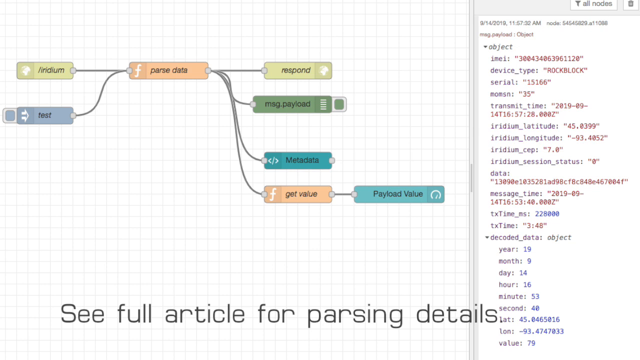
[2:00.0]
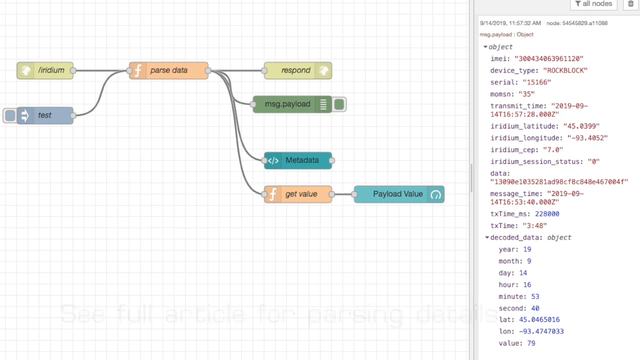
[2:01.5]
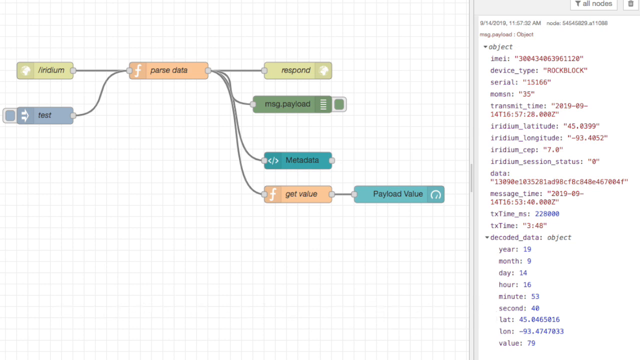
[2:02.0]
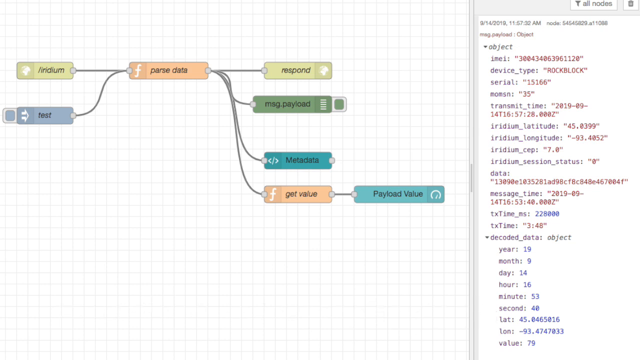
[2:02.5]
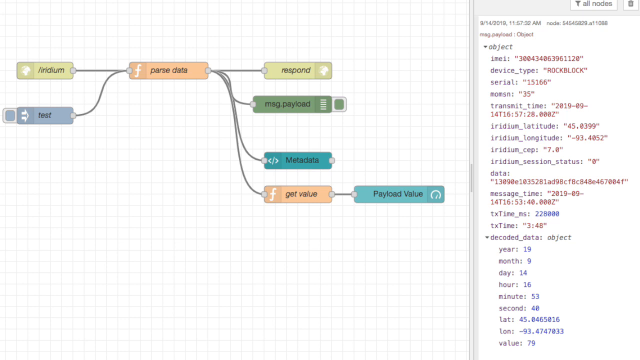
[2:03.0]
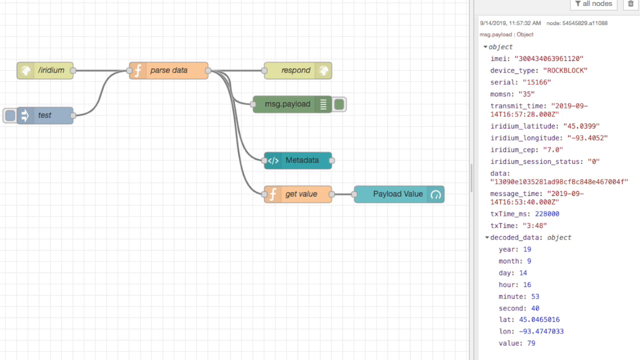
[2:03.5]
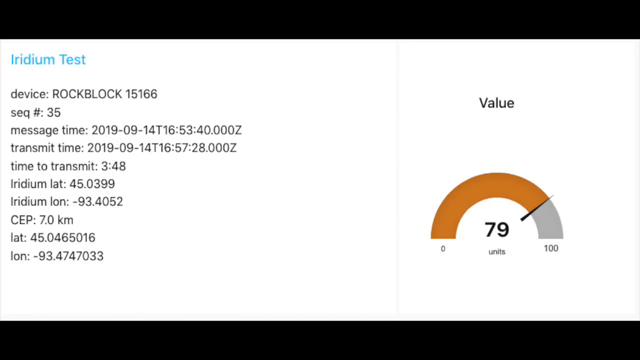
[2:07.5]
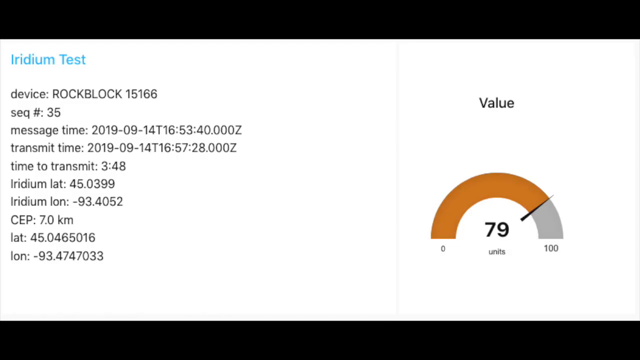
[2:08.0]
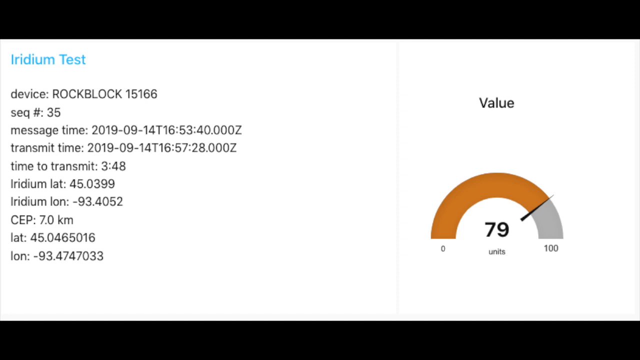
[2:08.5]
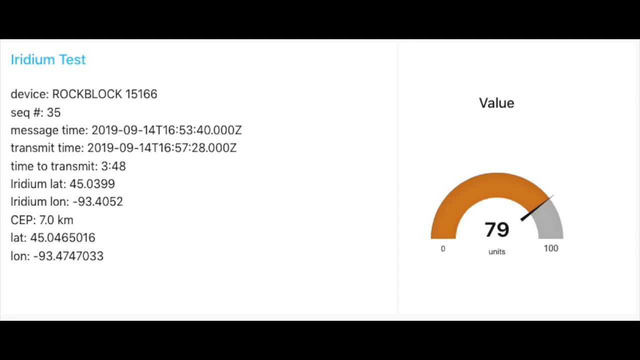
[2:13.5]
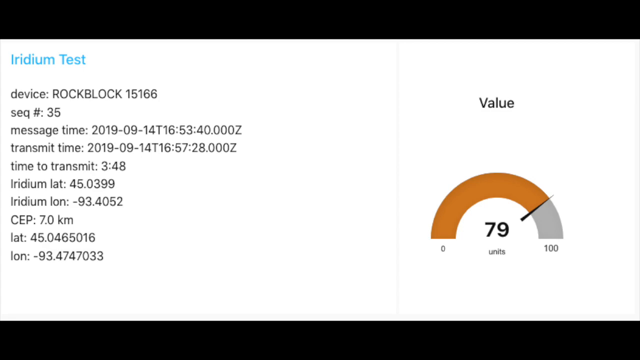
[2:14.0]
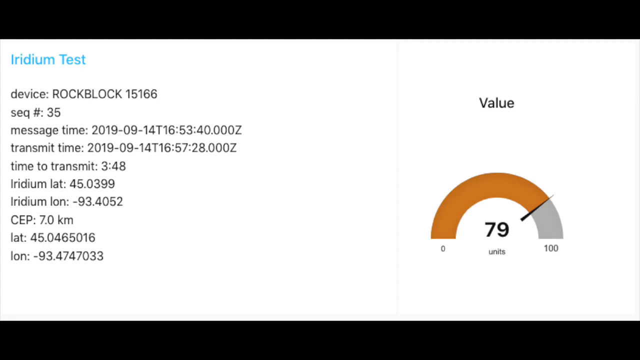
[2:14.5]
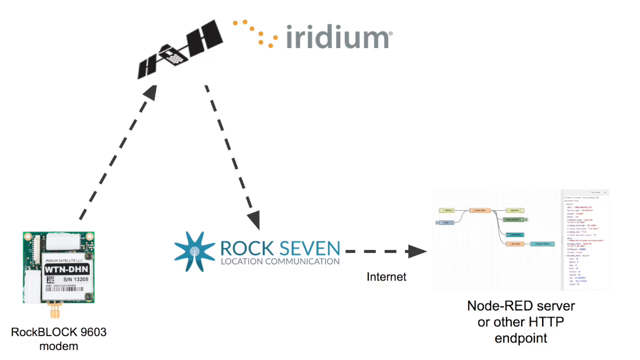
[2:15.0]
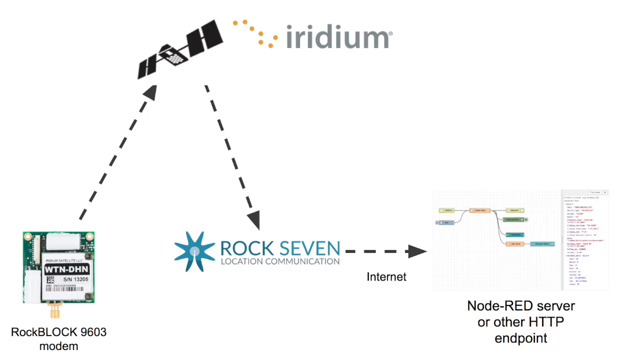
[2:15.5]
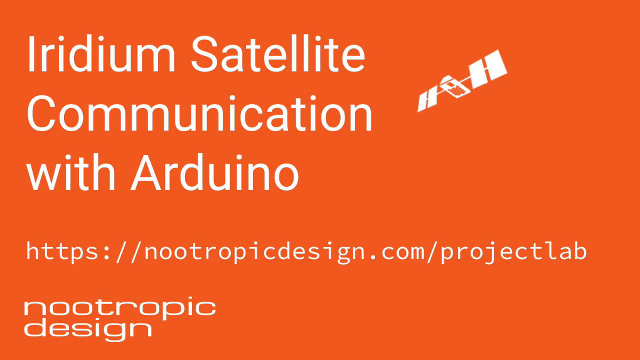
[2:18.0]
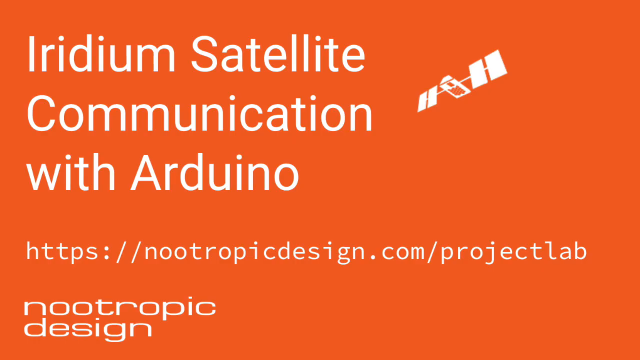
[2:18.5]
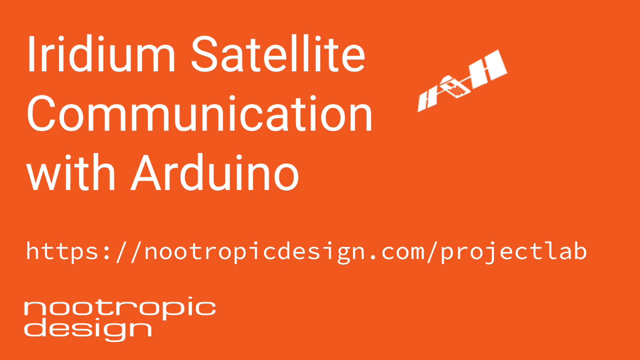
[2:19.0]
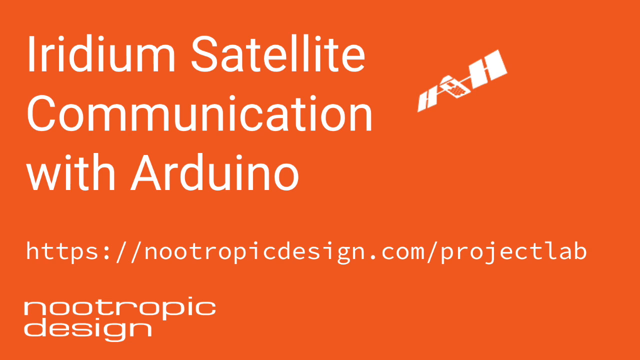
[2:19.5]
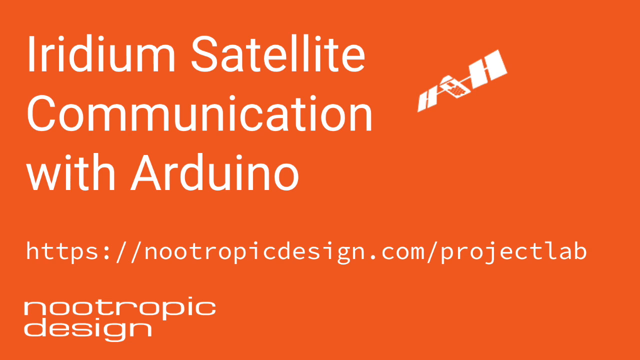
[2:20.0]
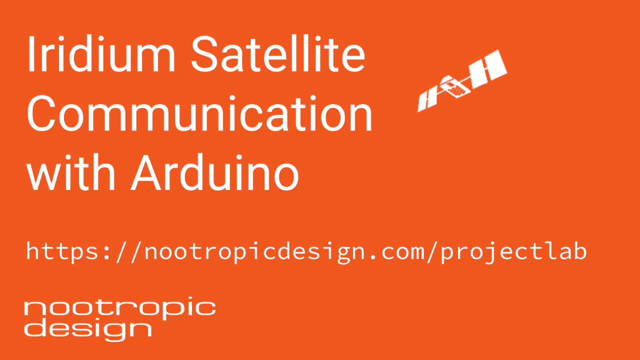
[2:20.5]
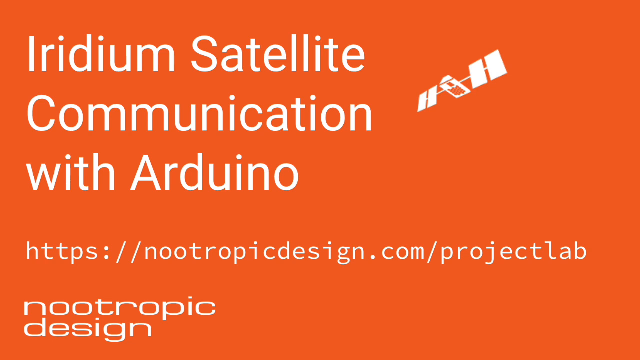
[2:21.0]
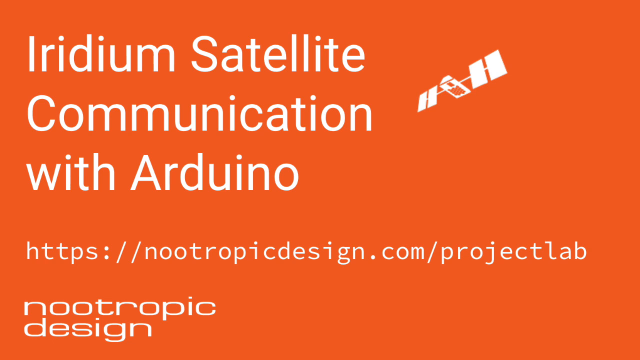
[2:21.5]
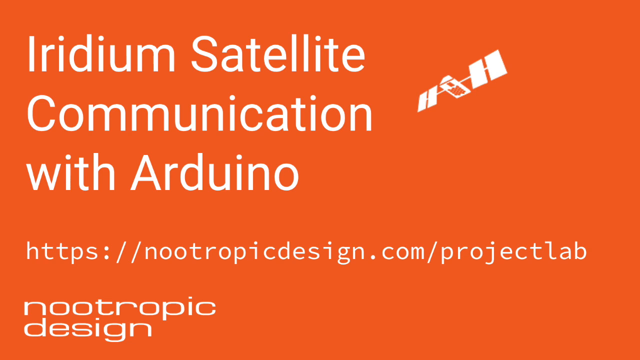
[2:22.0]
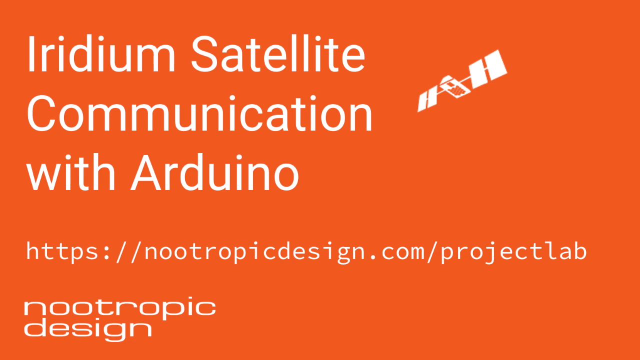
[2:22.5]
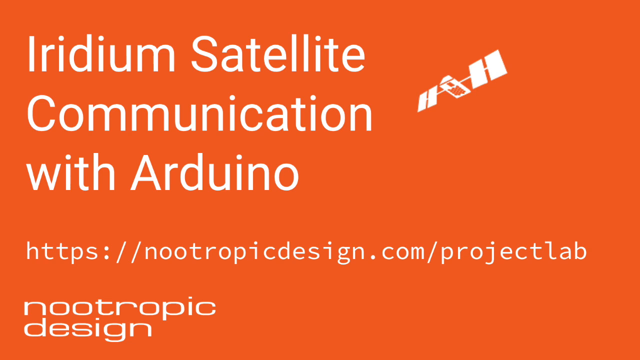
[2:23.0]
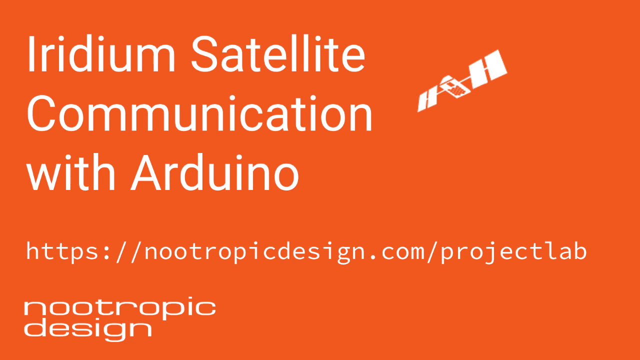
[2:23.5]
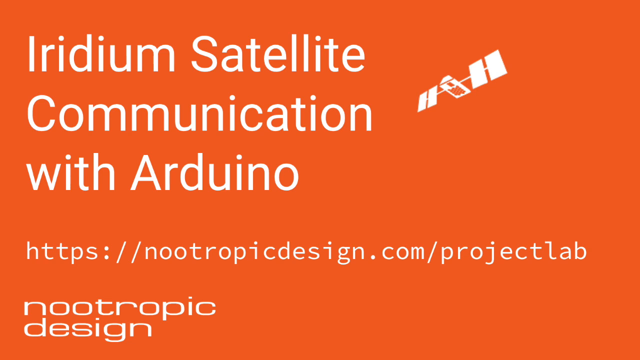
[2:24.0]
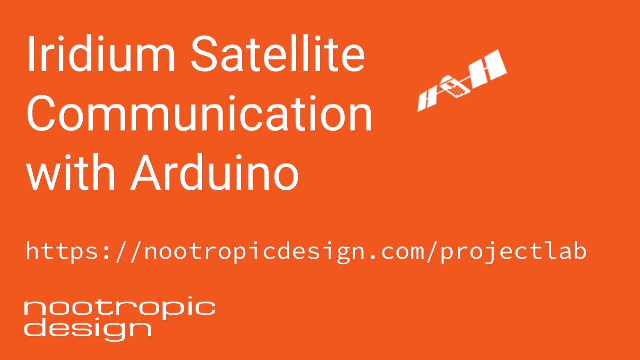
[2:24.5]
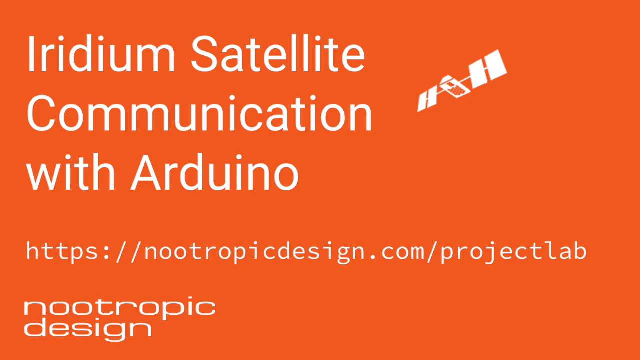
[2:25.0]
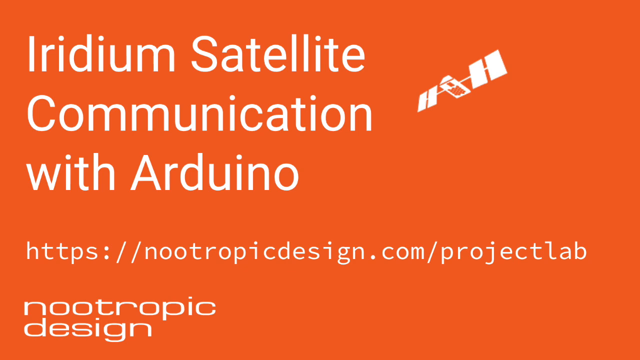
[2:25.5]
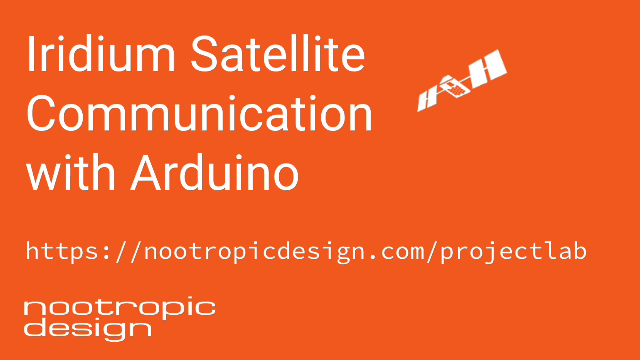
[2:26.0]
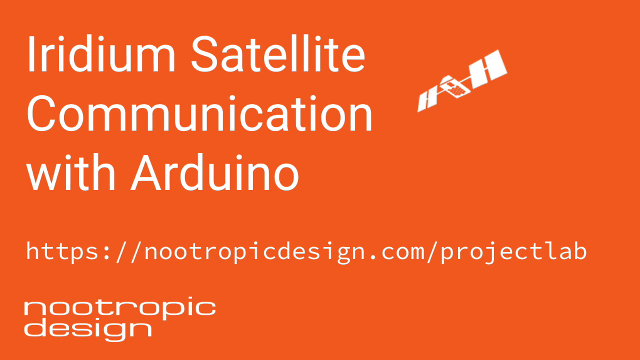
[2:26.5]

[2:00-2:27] The view stays on the part with the code down the right side and the small rectangles on the left. The background behind it is made of tiny black and white squares, and text is still scrolling across the bottom. In the boxes on the left side, the top one says "Iridium," the blue one below it says "test," and this goes to "parse data." To the right, from top to bottom, are "respond," "MSG payload," "metadata" and "get value," and "get value" branches out to "payload value." The video then goes to a white background with "Iridium test" at the top left. Down the side are about ten items of information, such as the device, the message time and the transmit time. On the right side, in the center toward the top, it says "value," above a small arch like a speedometer but with a solid bar, kind of dark orange, going from 0 to 100, with "79 units" in the center. Where the orange ends there is a small black line, and beyond that it is gray. The video then goes back to the white background with "Iridium" at the top, showing how everything connects, and then to the orange background from the beginning.